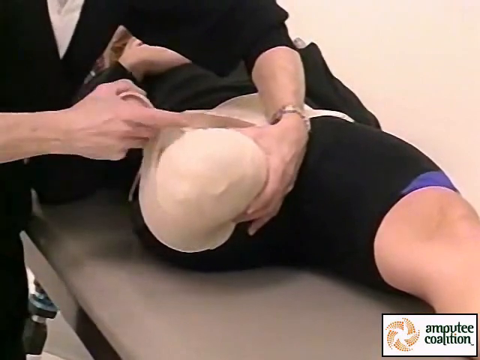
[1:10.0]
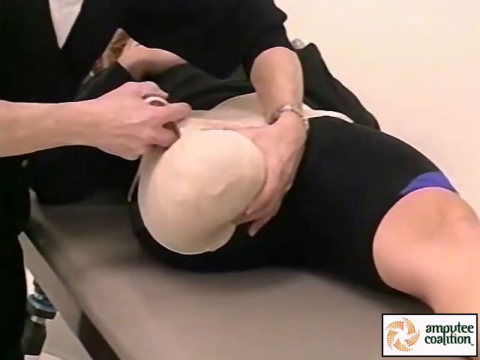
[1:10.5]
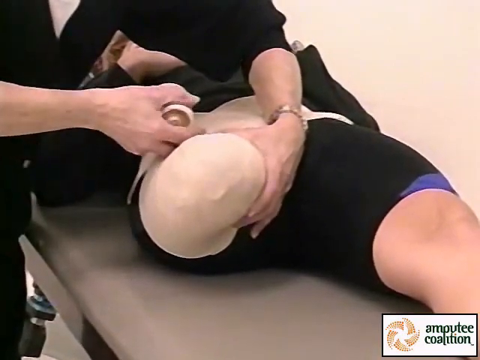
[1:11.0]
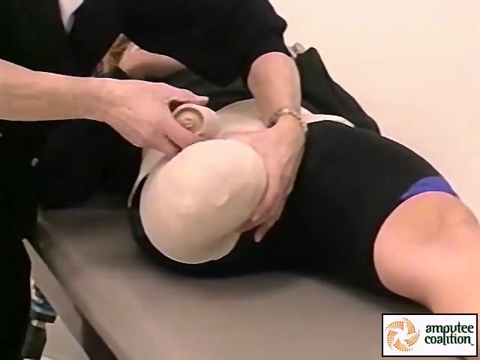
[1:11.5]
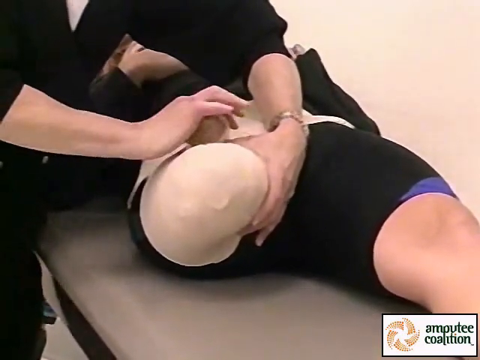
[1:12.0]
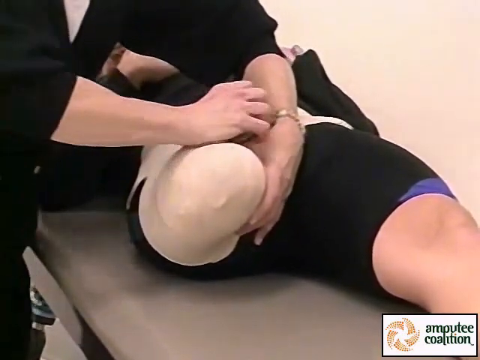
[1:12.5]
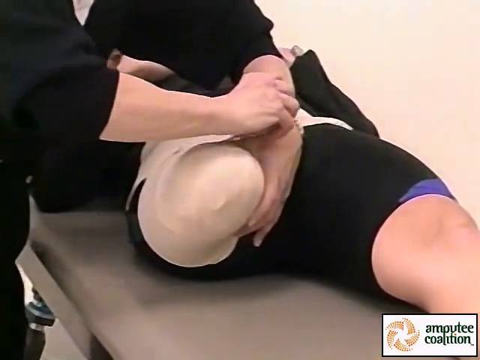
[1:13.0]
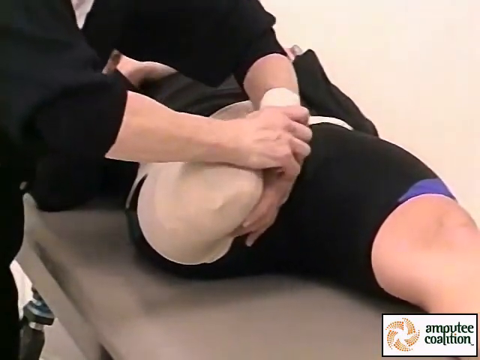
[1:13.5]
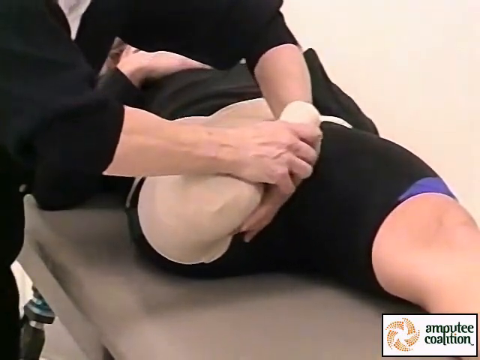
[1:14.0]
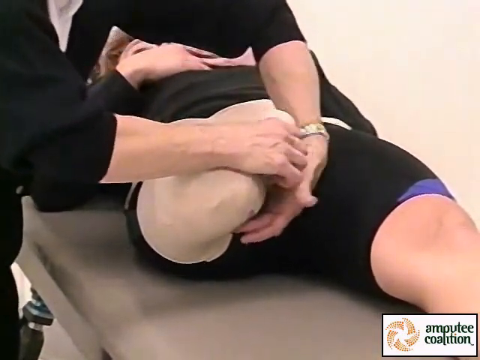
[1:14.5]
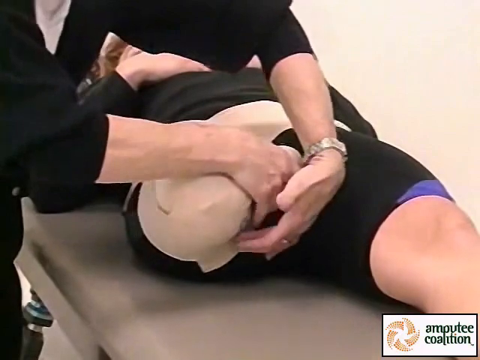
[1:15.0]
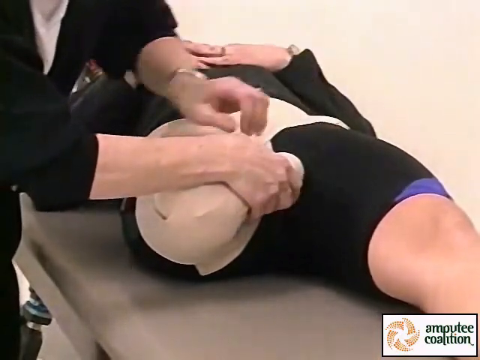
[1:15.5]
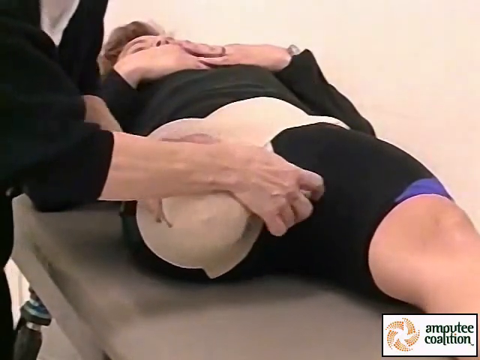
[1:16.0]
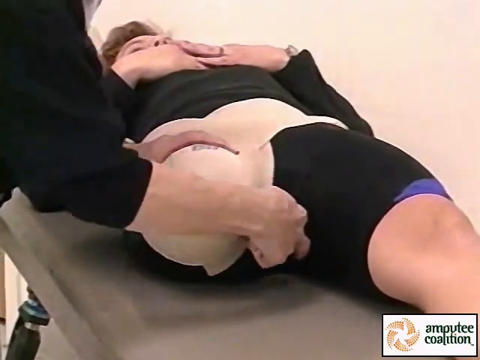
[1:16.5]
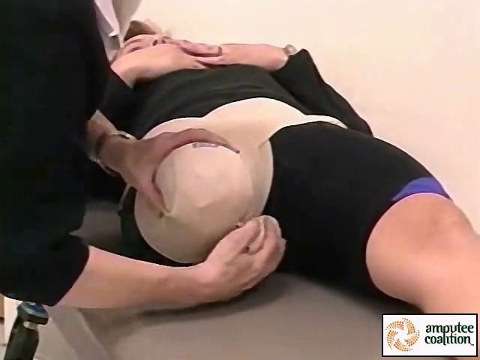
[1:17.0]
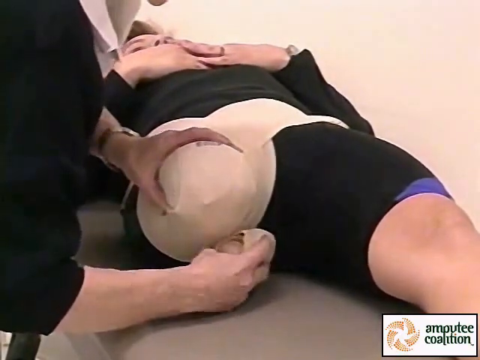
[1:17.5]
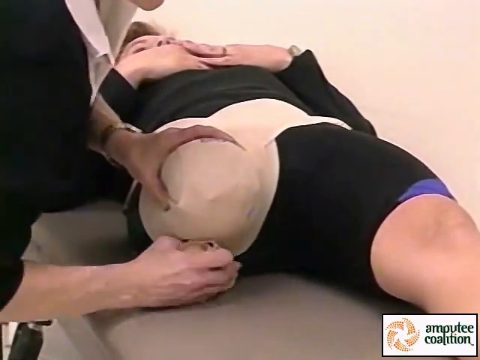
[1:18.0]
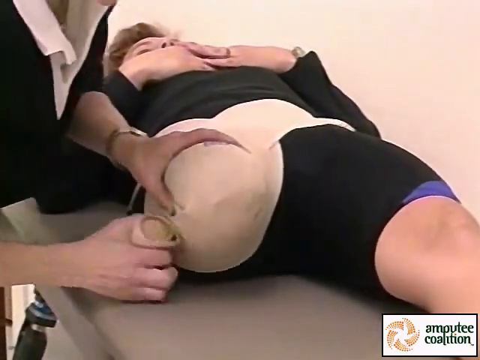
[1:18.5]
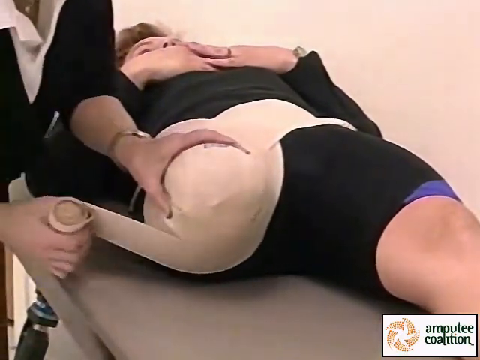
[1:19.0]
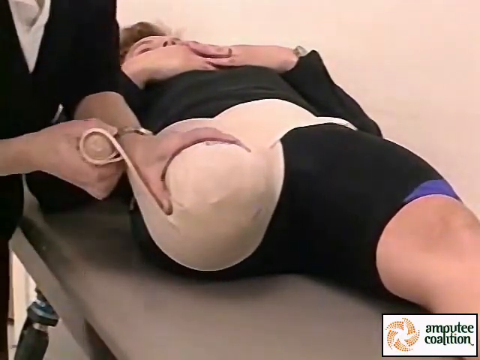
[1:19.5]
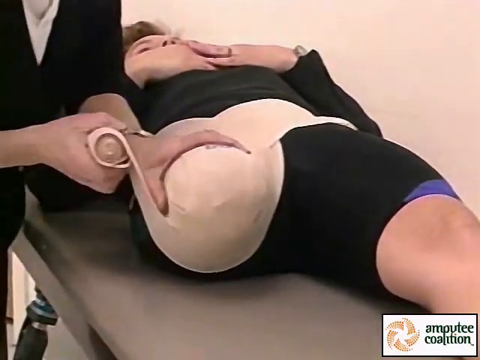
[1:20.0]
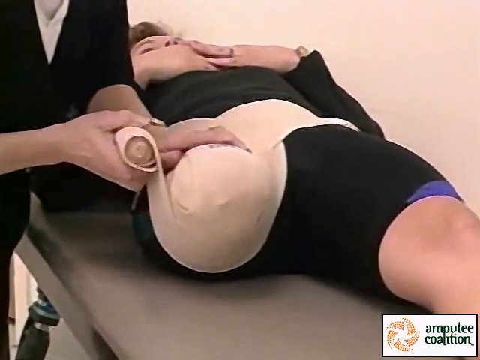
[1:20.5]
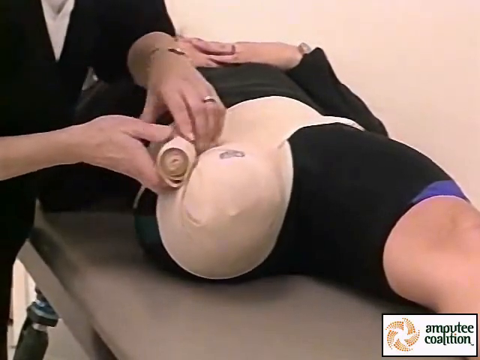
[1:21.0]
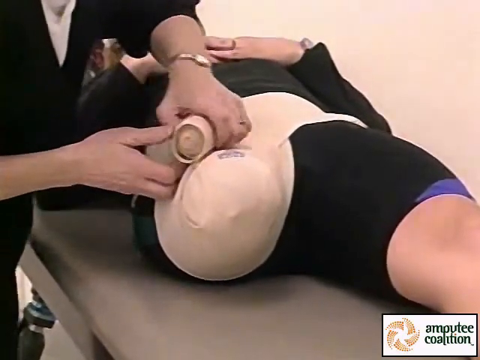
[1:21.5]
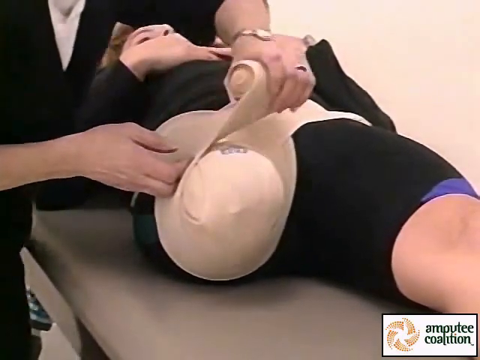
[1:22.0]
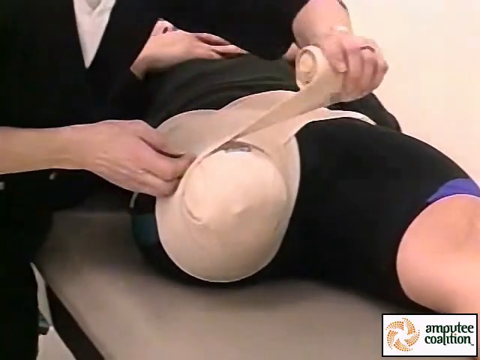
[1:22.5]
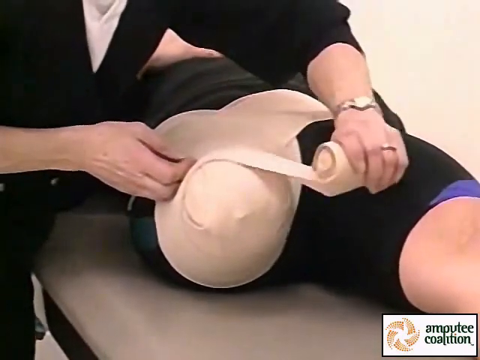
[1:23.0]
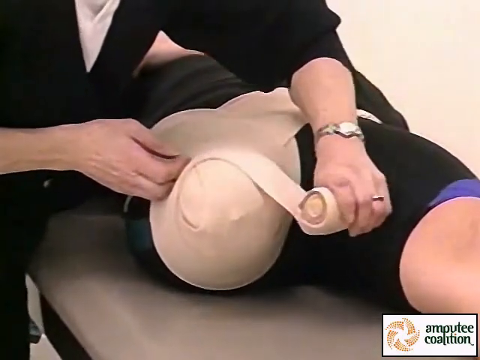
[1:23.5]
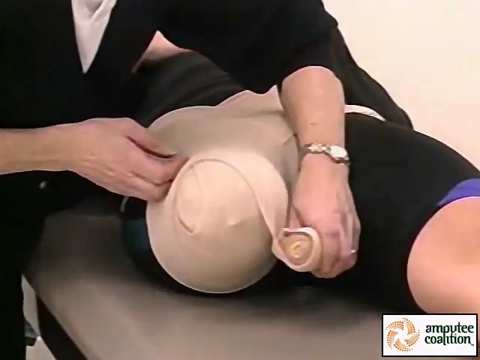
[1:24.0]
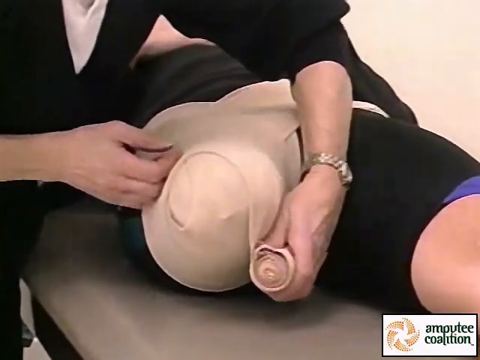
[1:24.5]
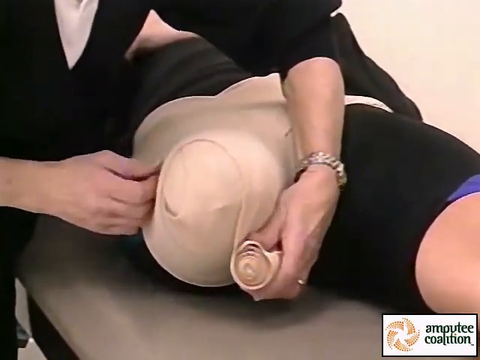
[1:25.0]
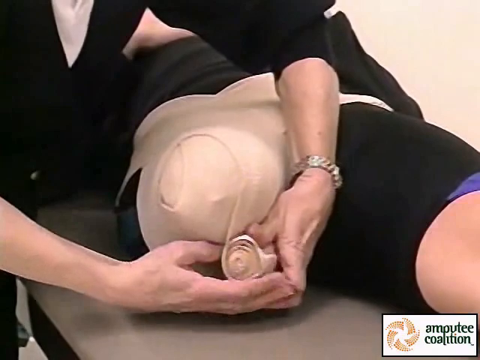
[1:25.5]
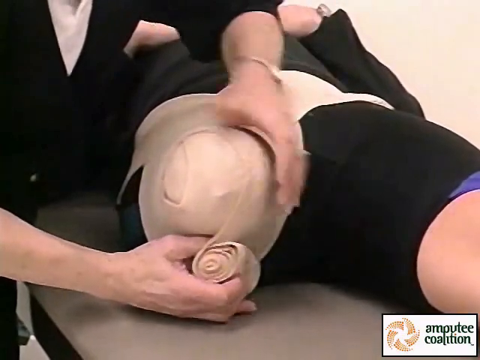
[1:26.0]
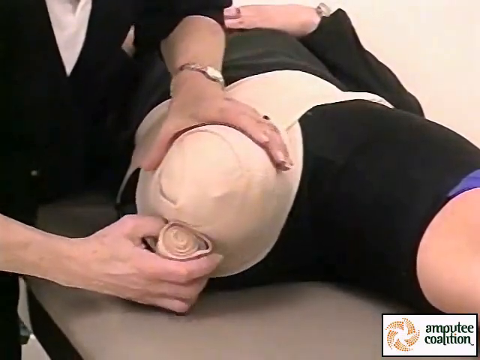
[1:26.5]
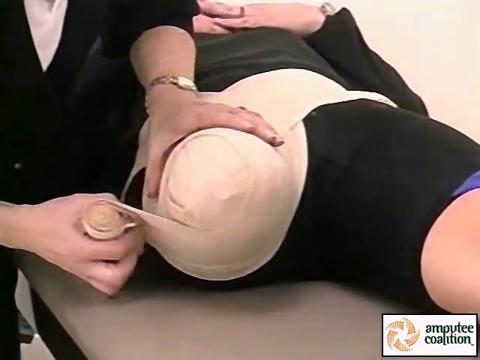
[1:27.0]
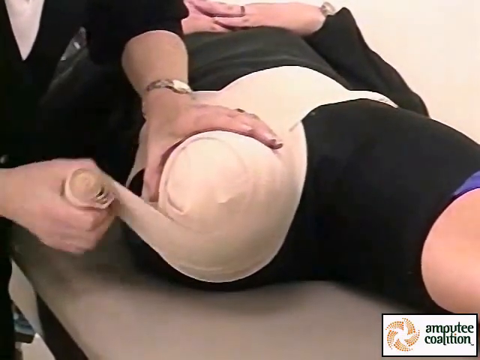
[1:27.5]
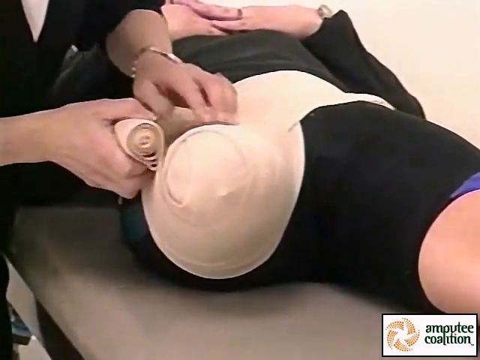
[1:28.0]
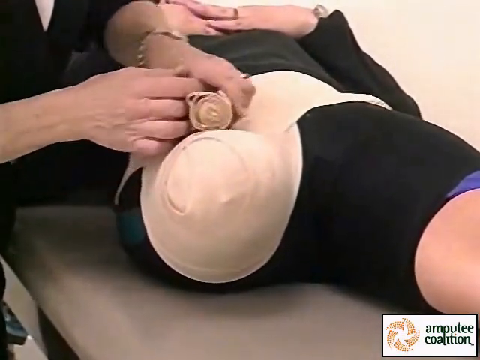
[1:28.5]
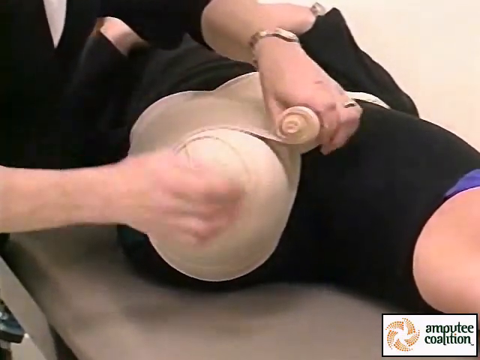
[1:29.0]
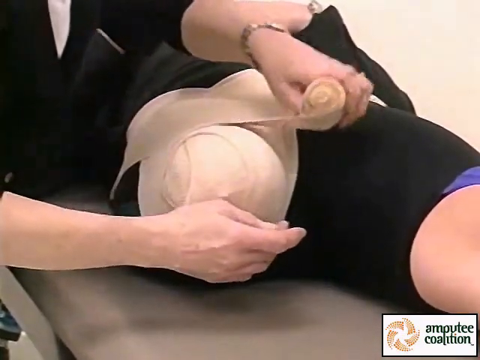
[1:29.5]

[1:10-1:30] A person lies on her back on a tan mat, wearing a long-sleeved black shirt, a watch on her left wrist, and tight black spandex shorts with purple on the tips of the legs. She is missing her right leg and has a bandage around her pelvis, which is where the bandage started. A person standing on the left side of the bed wears black pants and a long-sleeved black shirt rolled up to her elbows, plus a watch on her left arm. She wraps a bandage around the stub of the right leg, continuing around and around, to the front of the stub, underneath, and around again, many times.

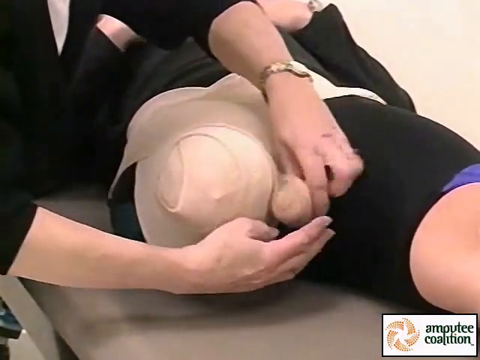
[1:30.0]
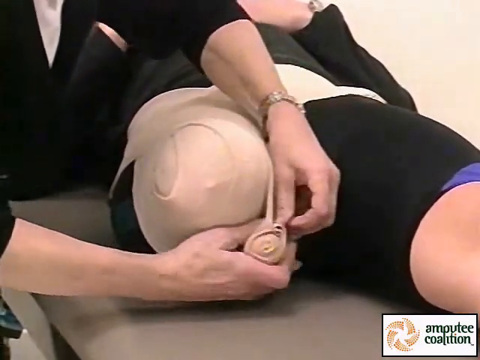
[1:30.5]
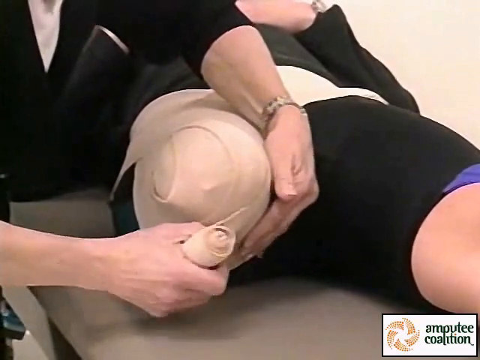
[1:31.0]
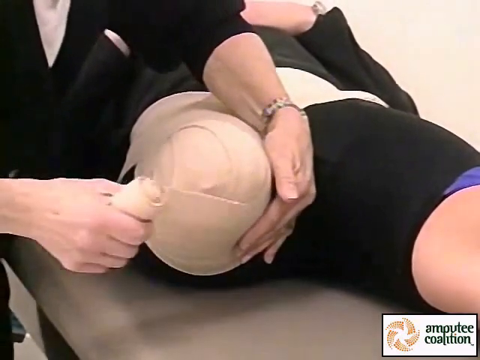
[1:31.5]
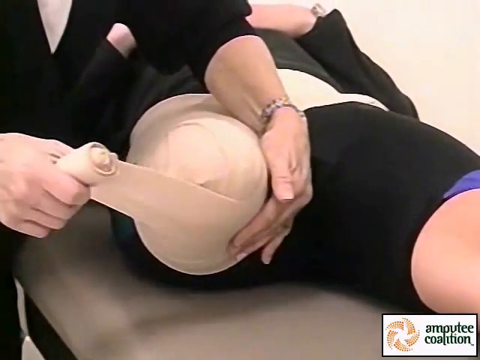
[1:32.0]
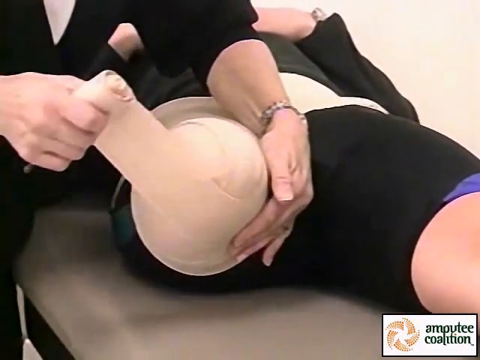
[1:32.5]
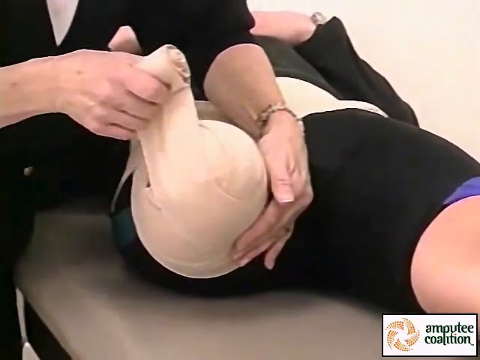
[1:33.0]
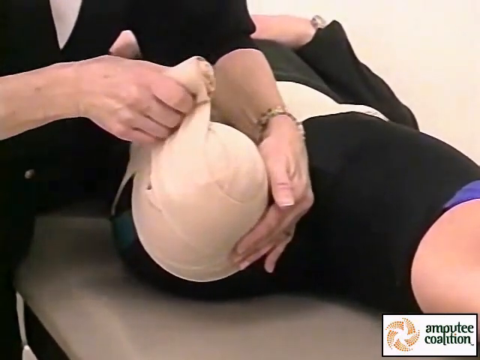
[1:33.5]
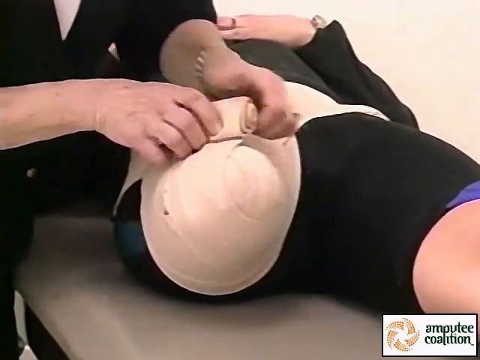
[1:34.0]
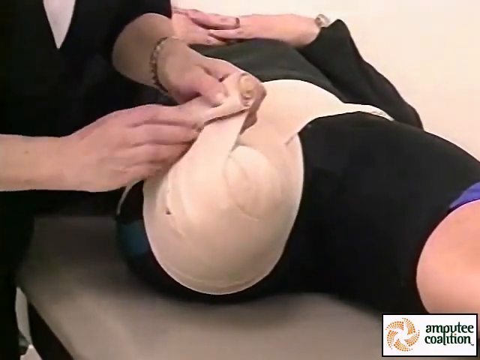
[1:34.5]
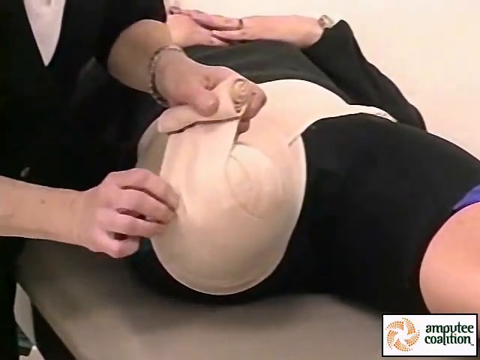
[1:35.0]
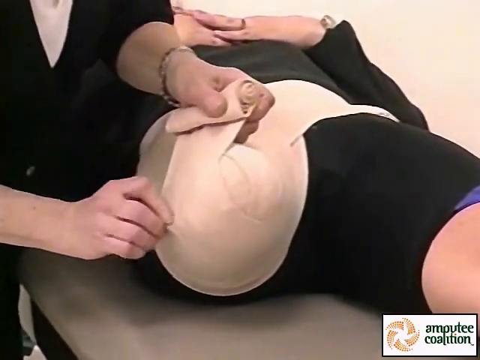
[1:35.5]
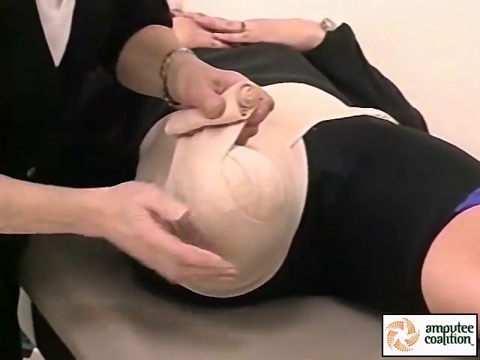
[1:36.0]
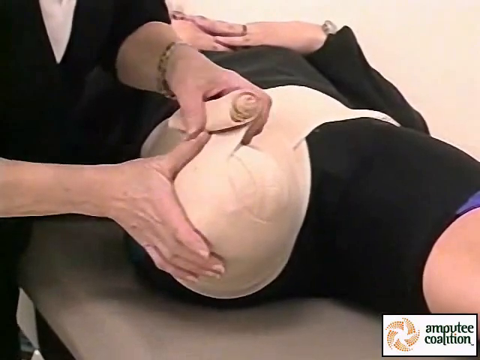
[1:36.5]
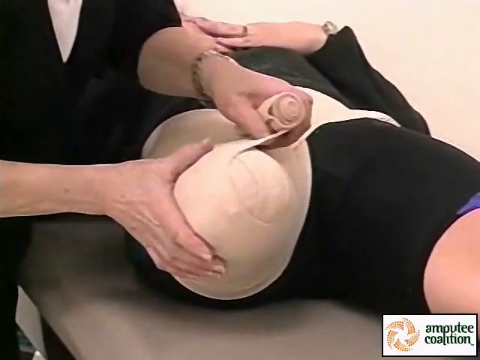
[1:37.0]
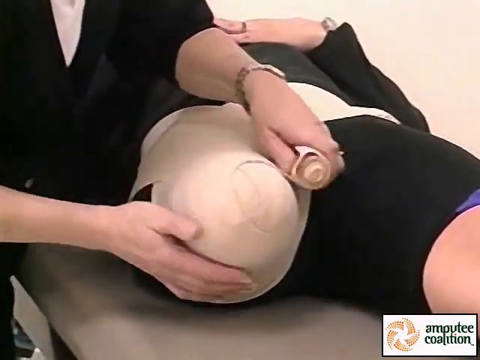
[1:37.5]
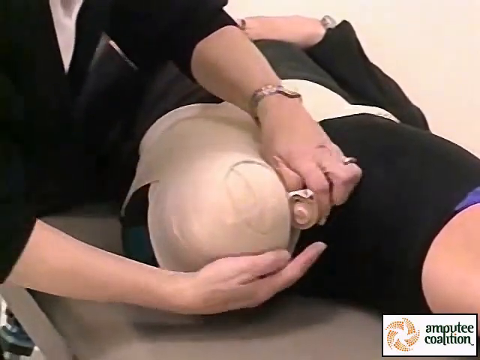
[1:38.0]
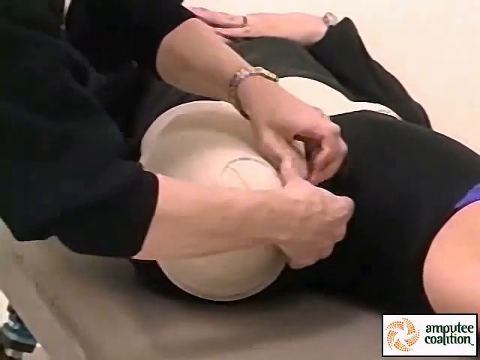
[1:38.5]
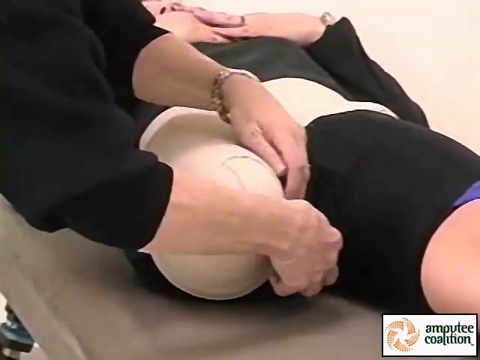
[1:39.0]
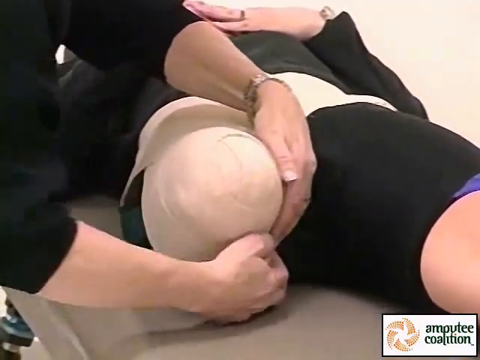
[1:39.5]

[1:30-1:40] A person lies on her back on a tan mat, wearing a long-sleeved black shirt, tight black spandex shorts, and a watch on her left arm. She is missing her right leg. A person standing on the left side of the bed, wearing a white shirt under her black shirt and a watch on her left arm, holds a bandage and wraps it around the stub of the right leg, going up, under, and around until the stub is completely covered.